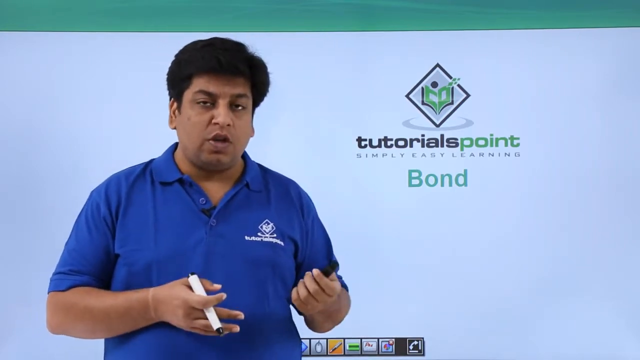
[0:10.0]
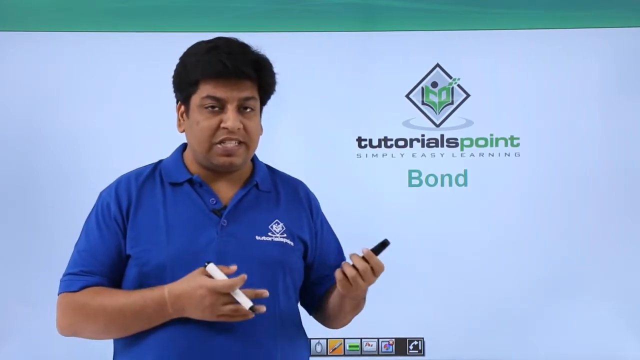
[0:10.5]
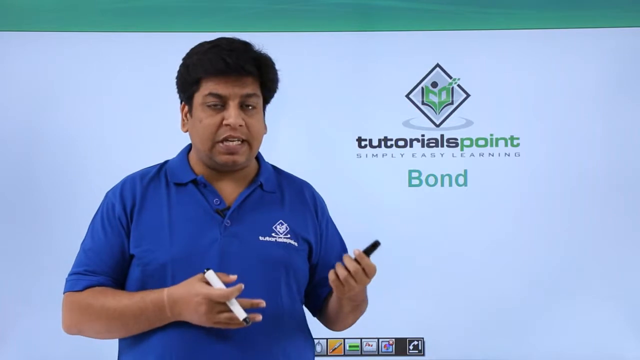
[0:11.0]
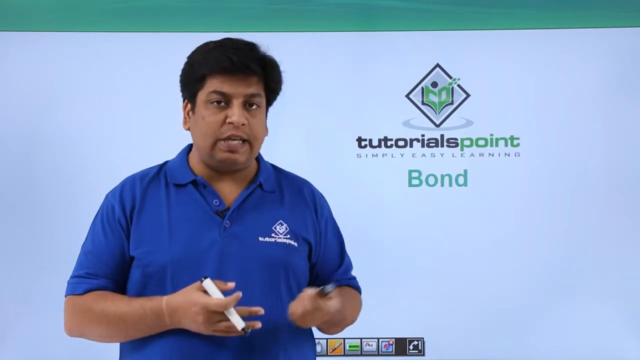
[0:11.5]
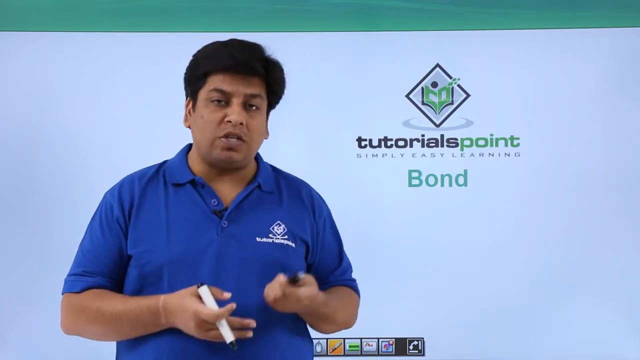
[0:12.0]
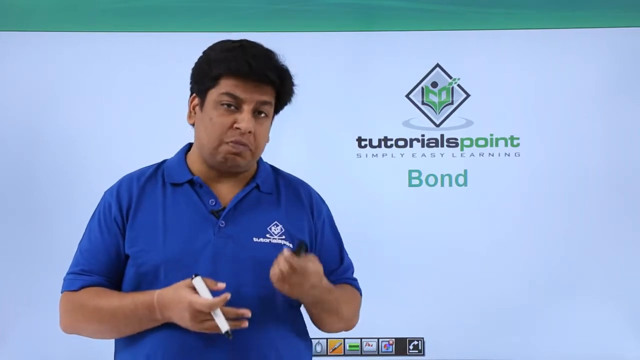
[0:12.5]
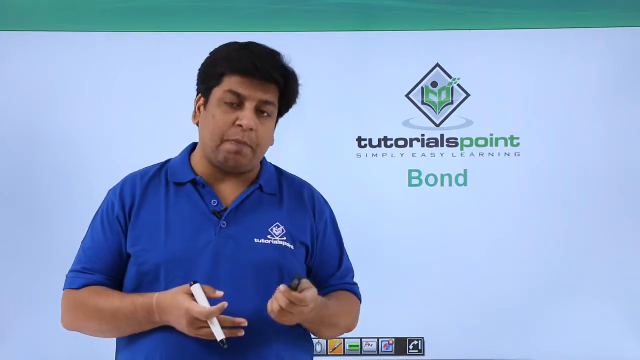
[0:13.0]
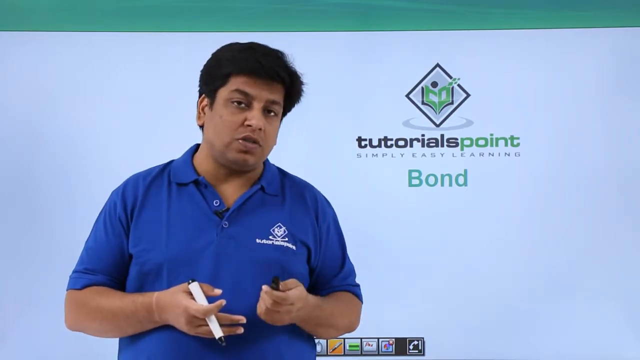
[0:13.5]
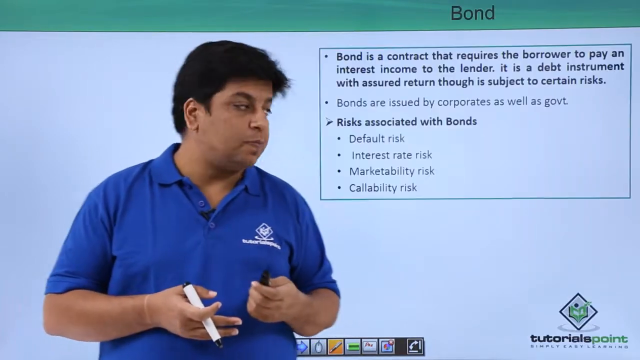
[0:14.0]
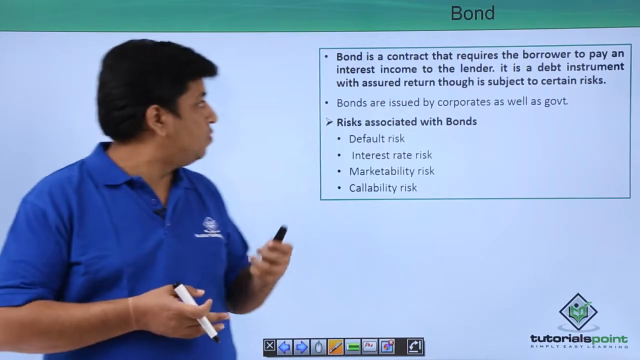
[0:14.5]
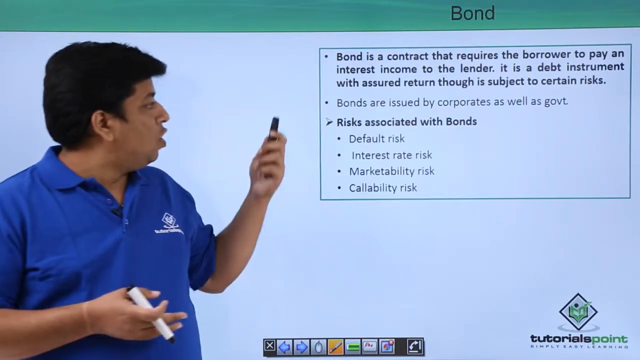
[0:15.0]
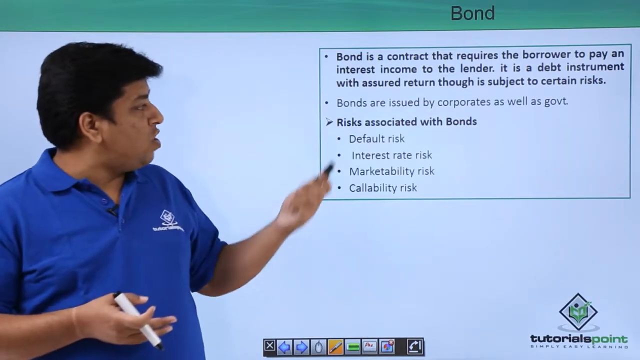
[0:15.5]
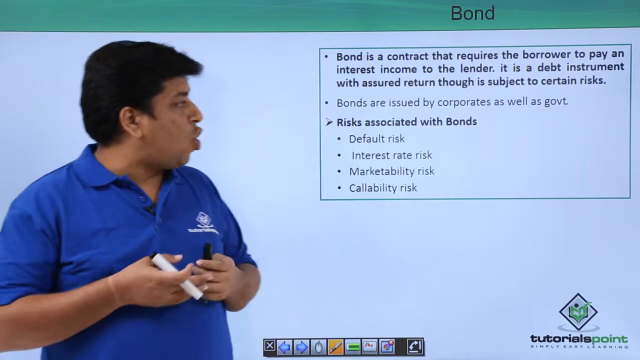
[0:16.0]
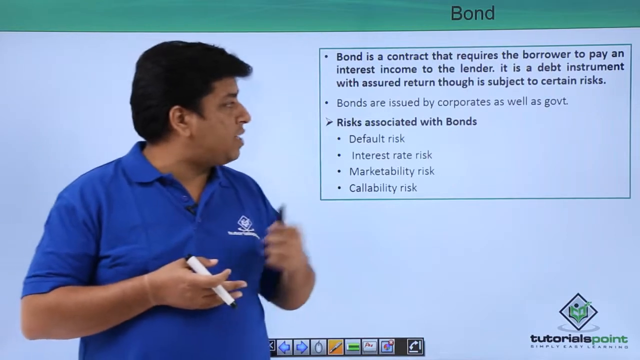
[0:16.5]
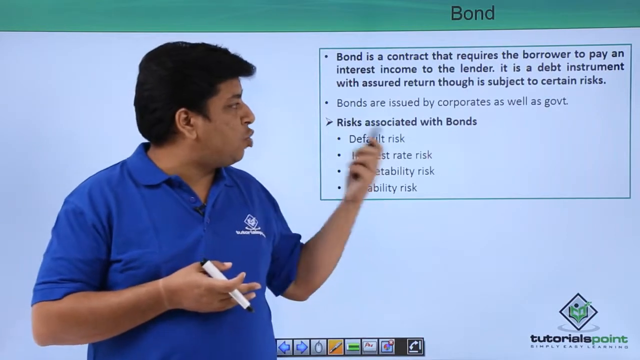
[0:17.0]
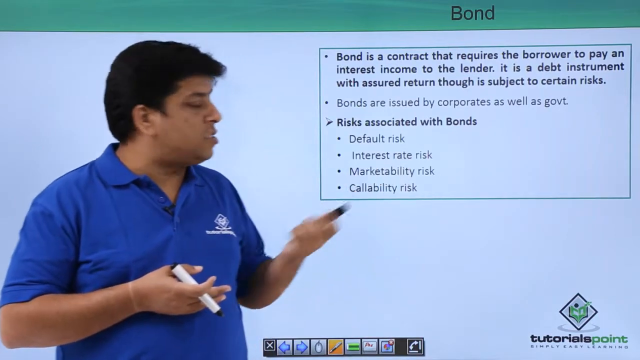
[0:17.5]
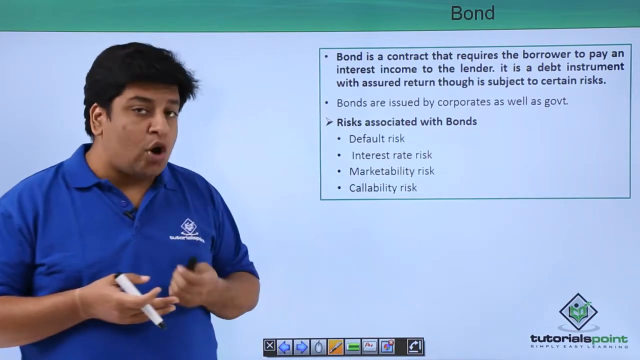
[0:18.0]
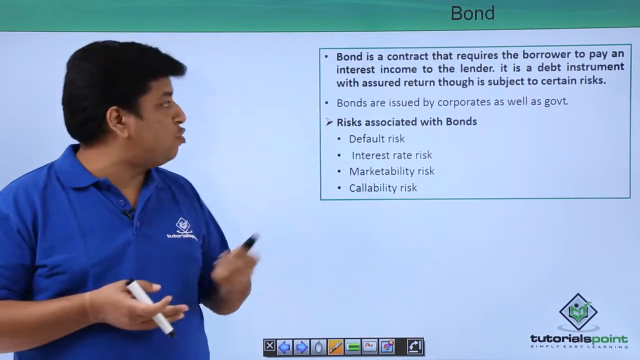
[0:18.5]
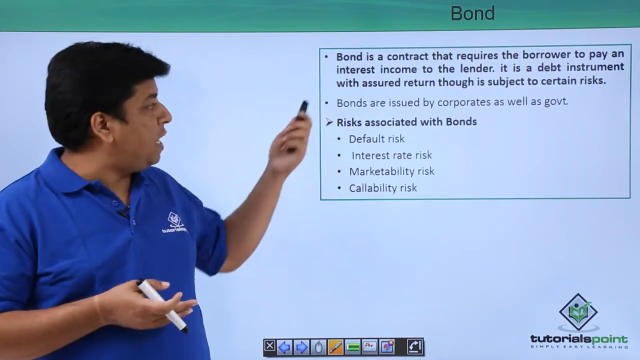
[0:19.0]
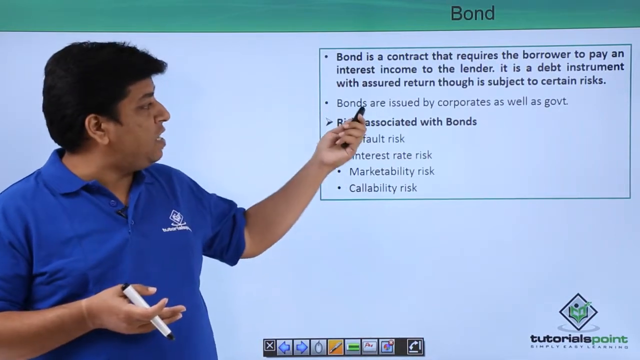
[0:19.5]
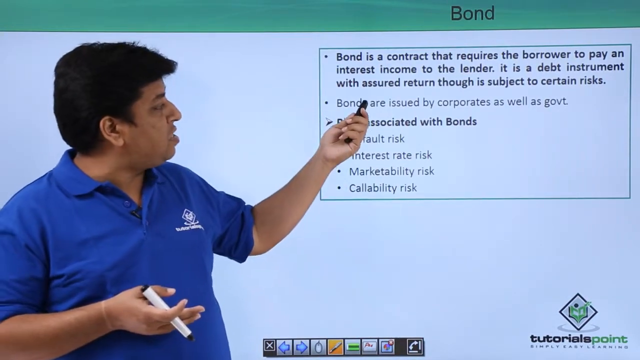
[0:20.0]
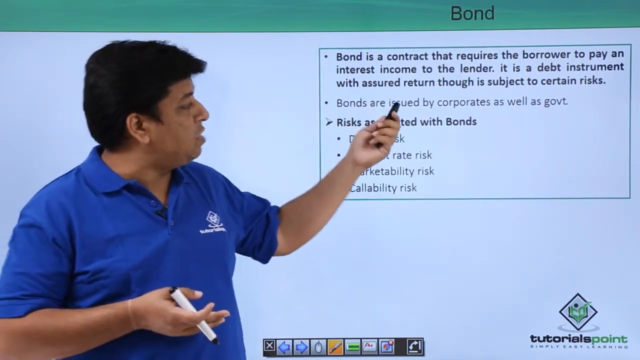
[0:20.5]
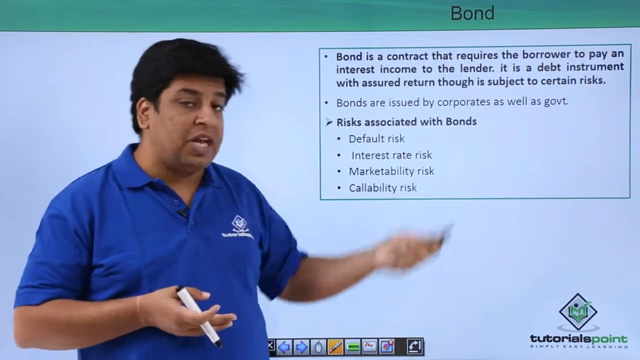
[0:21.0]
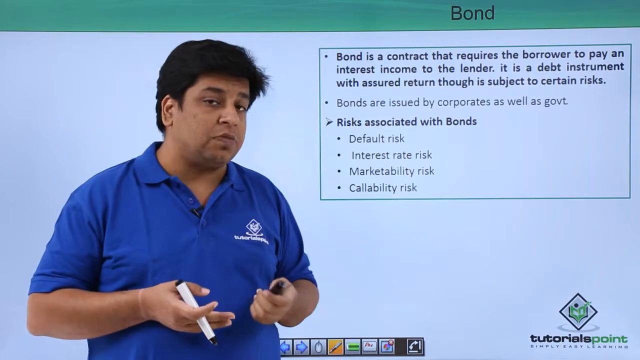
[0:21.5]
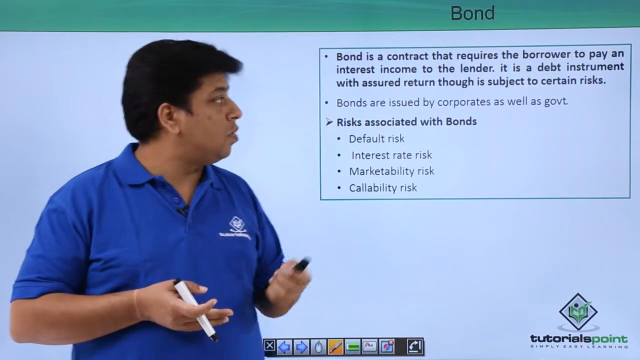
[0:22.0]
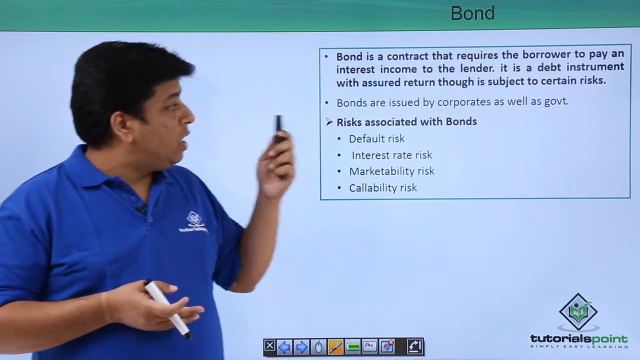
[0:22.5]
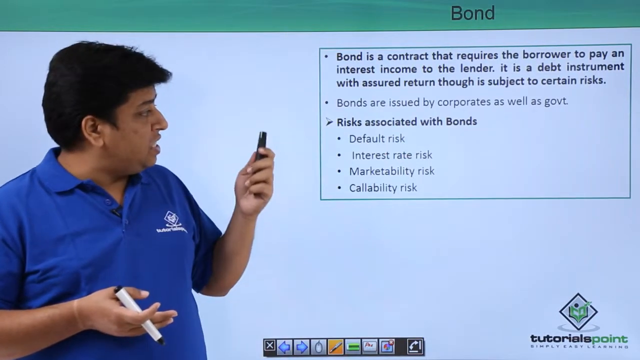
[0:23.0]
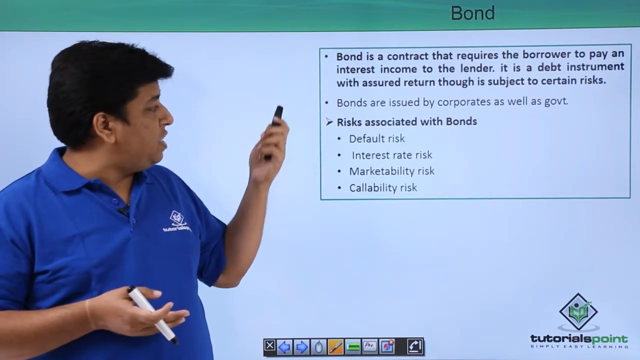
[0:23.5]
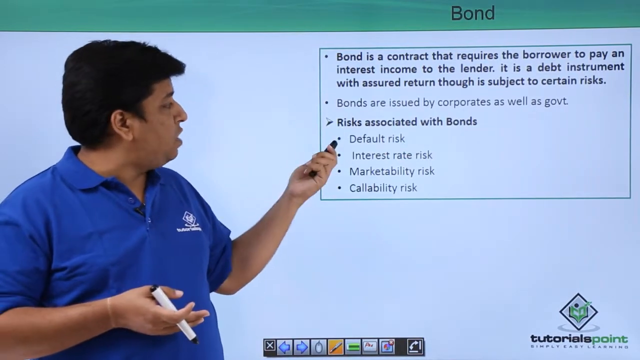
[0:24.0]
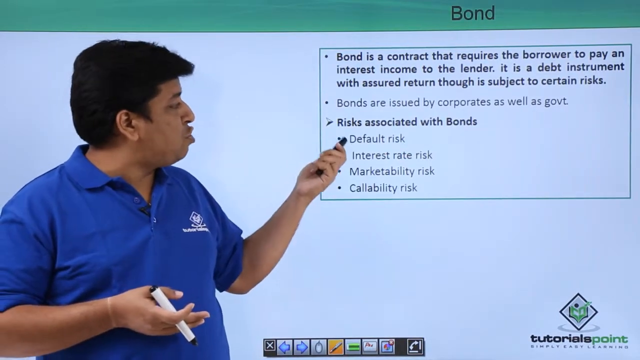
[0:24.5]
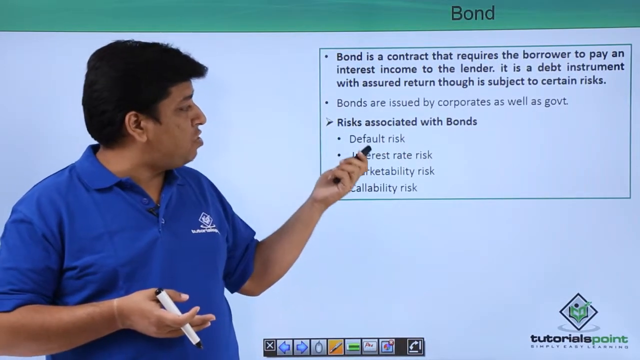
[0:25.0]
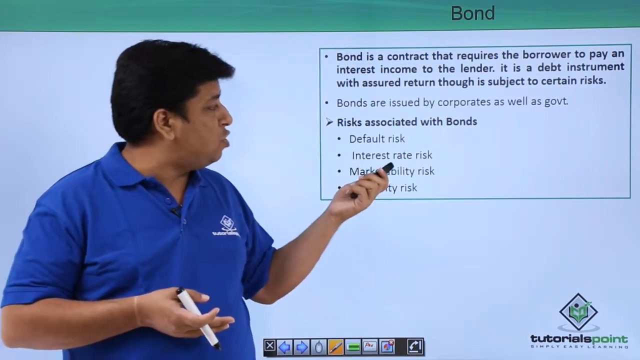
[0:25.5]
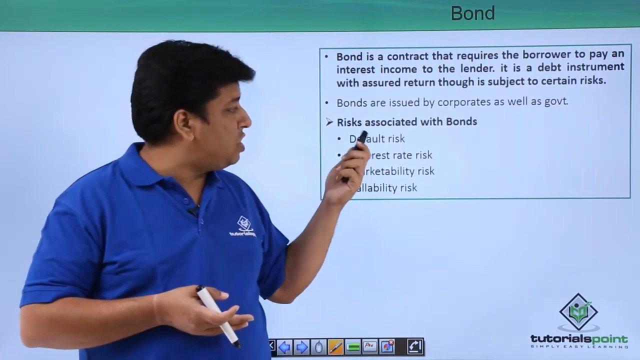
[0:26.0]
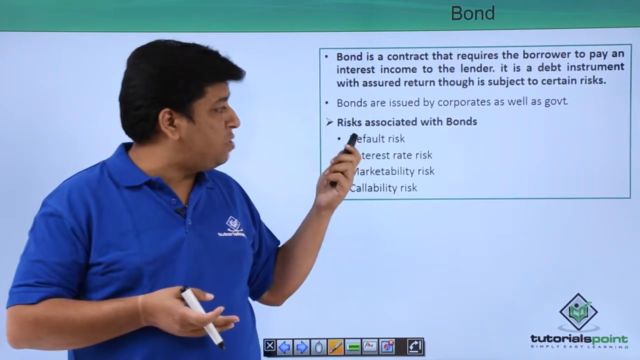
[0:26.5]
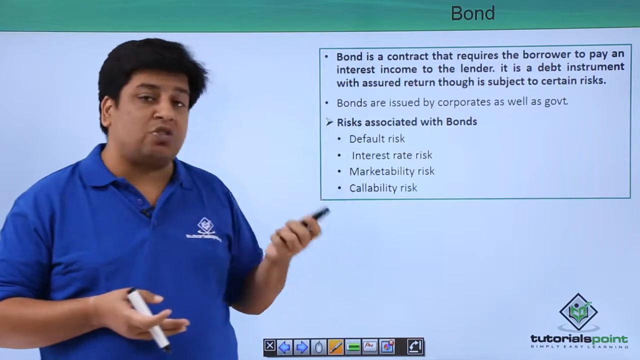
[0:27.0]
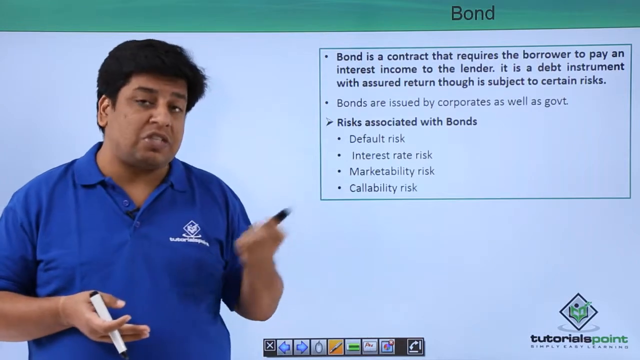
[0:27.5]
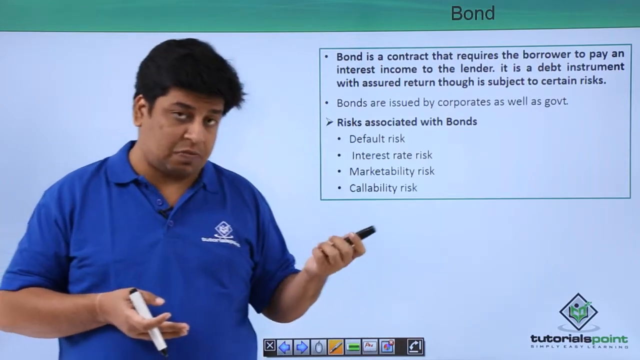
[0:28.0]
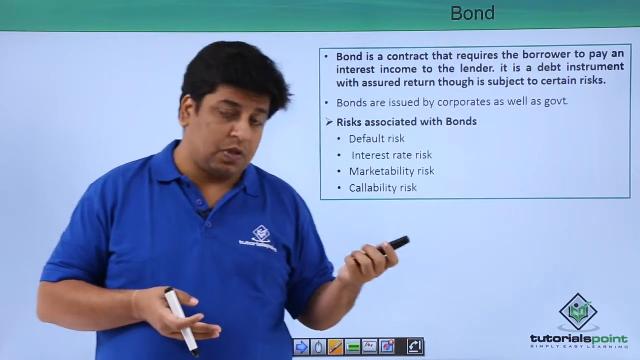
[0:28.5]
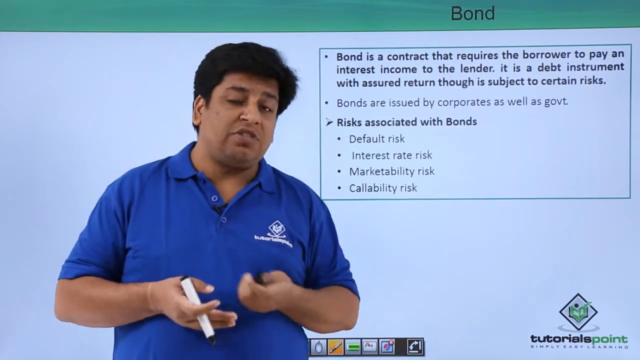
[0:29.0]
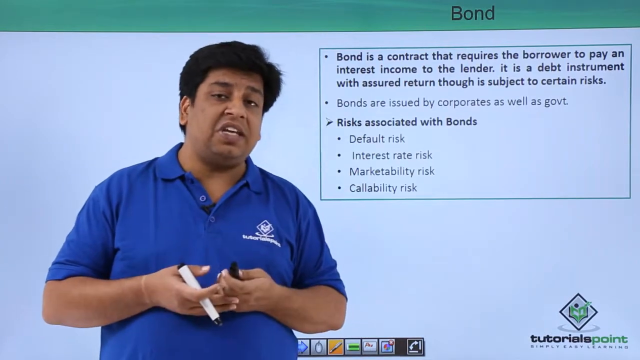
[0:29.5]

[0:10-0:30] An Indian man on the left side of the screen wears a blue polo with the Tutorials Point logo on his left breast. The Tutorials Point logo is also on the screen to his left, with the word "bond" under it. The logo then turns into a definition of the term bond. He looks off to his left, reading the text: "bond is a contract that requires the borrower to pay an interest income to the lender. It is a debt instrument with an assured return". The next line reads "bonds are issued by corporates as well as governments", followed by "risk associated with bonds, default risk, interest rate risk, marketability risk, and callability risk". He reads the definition on the screen as if teaching about bonds.